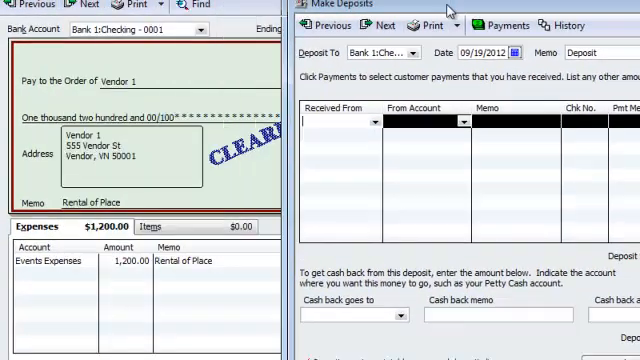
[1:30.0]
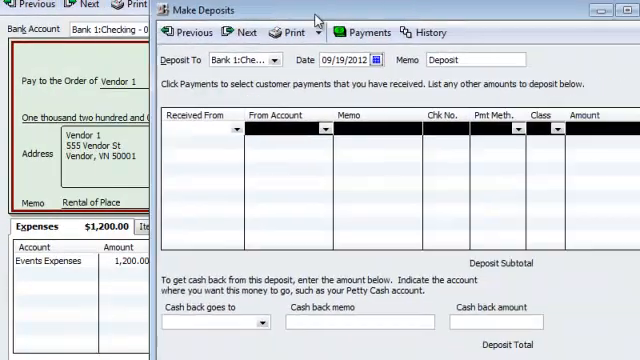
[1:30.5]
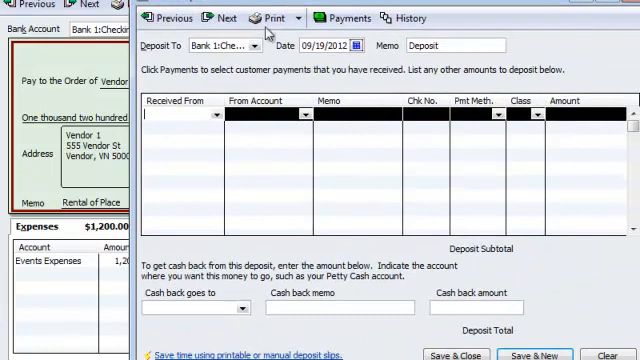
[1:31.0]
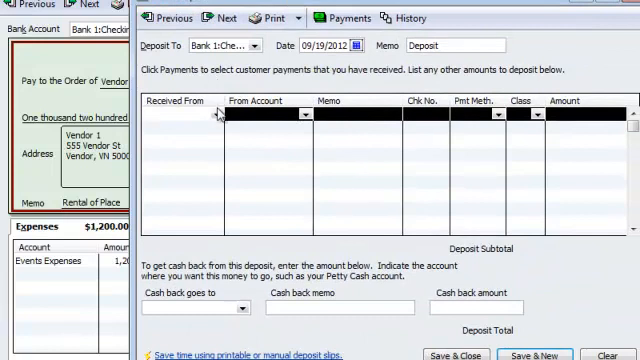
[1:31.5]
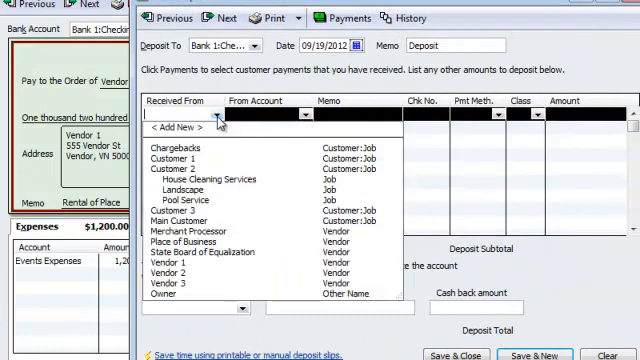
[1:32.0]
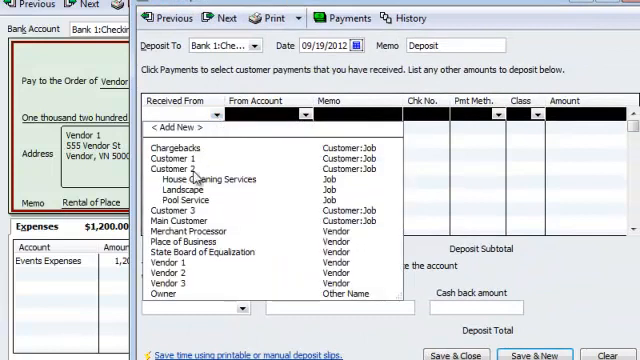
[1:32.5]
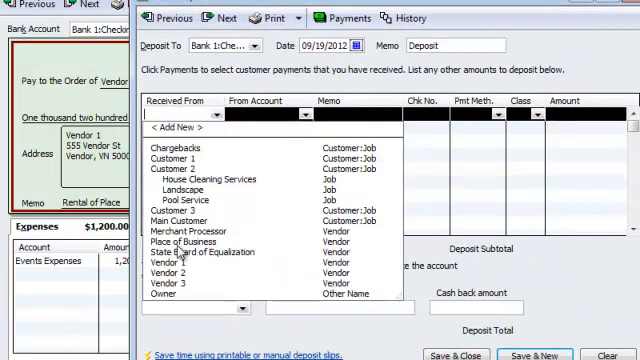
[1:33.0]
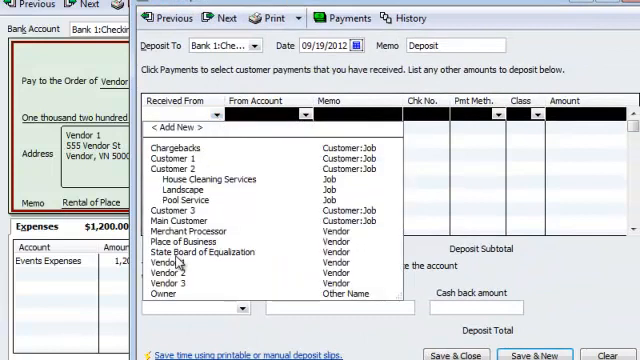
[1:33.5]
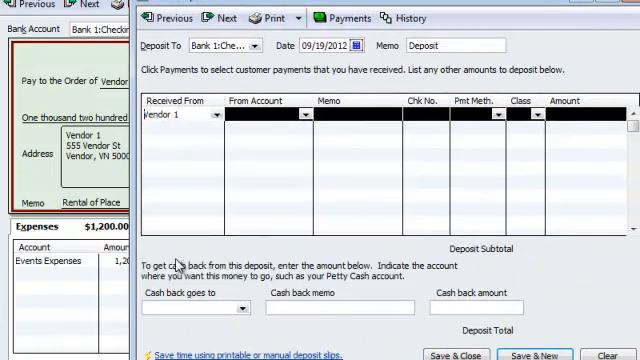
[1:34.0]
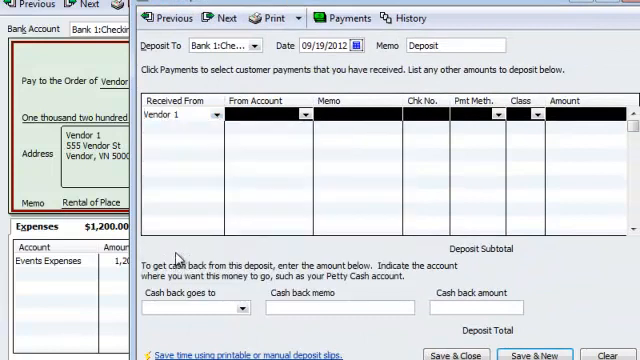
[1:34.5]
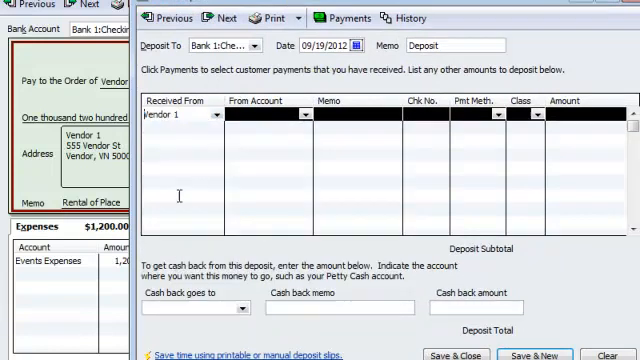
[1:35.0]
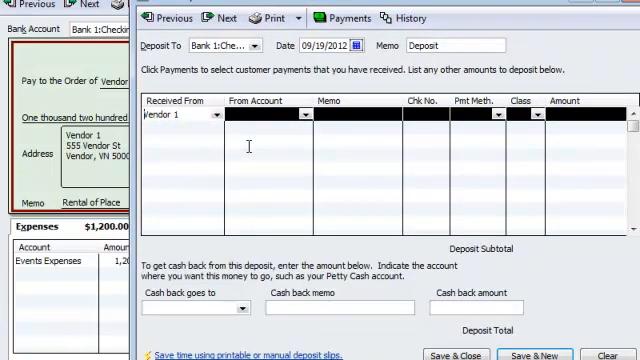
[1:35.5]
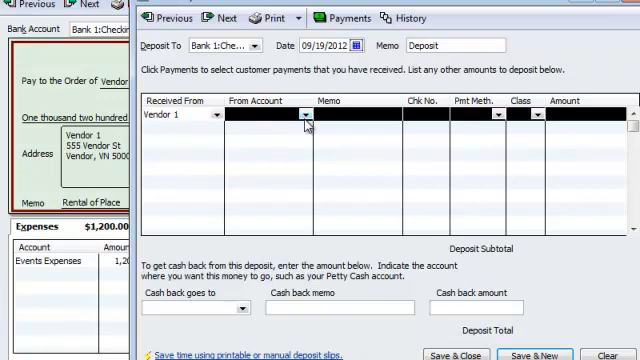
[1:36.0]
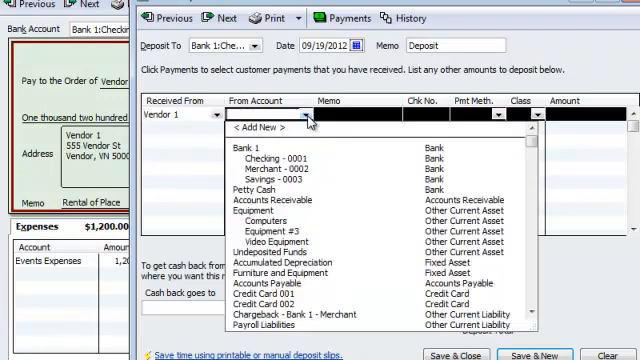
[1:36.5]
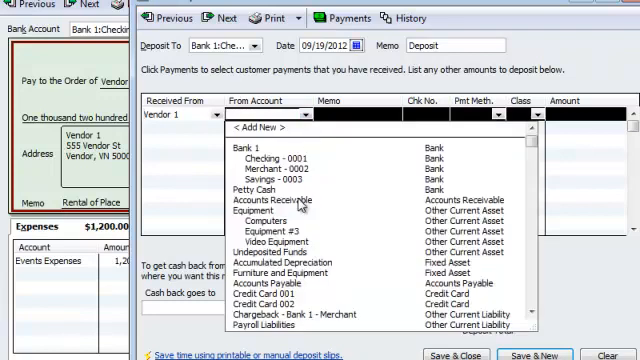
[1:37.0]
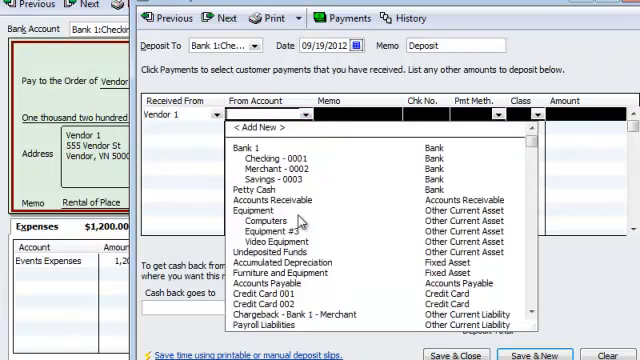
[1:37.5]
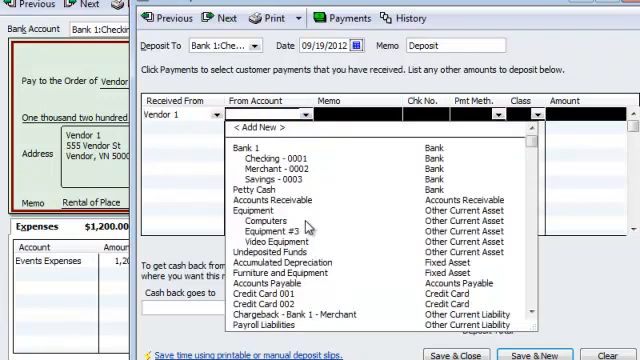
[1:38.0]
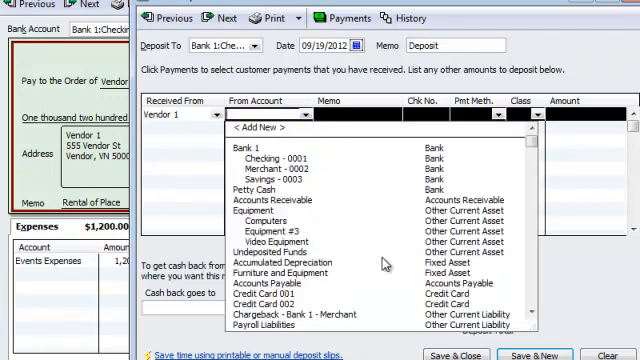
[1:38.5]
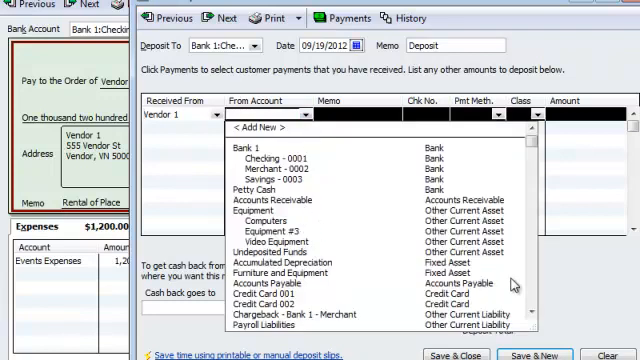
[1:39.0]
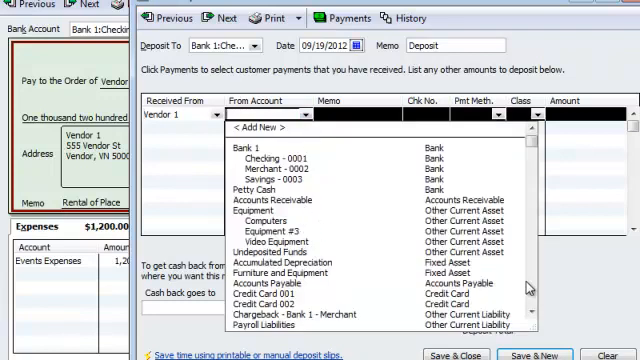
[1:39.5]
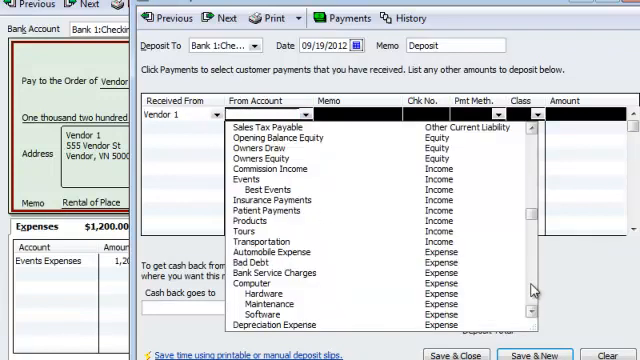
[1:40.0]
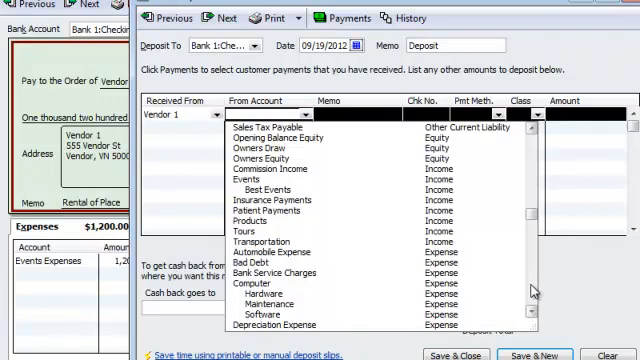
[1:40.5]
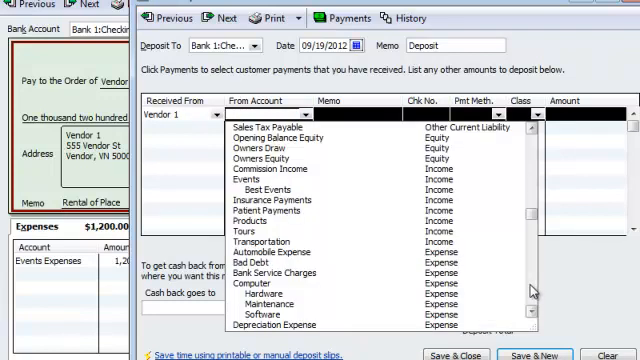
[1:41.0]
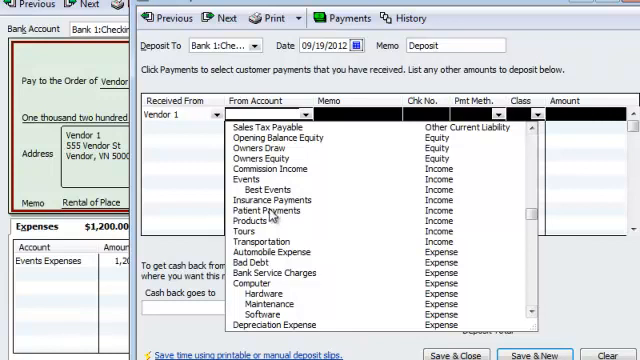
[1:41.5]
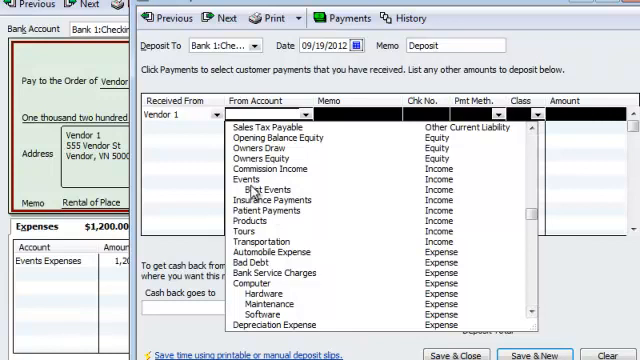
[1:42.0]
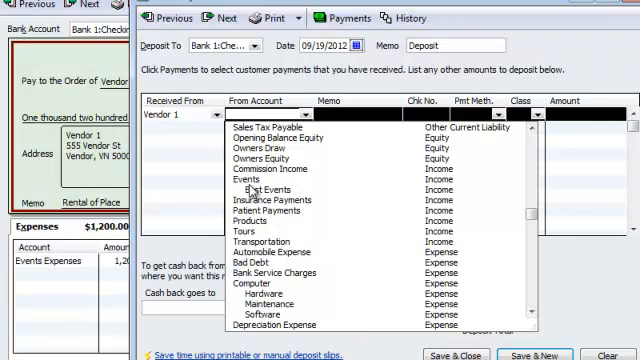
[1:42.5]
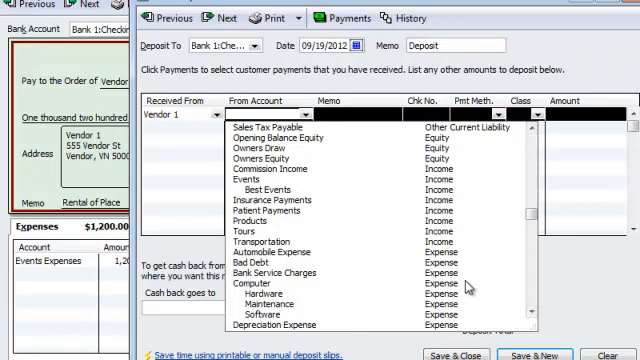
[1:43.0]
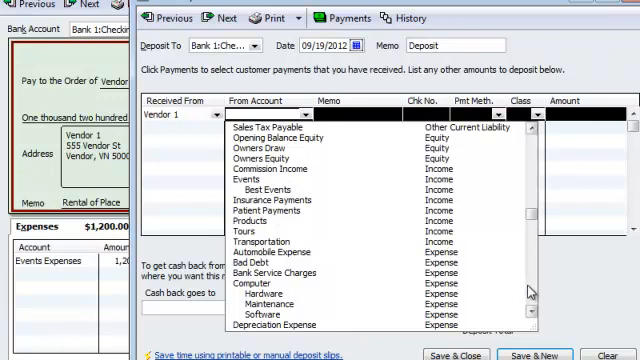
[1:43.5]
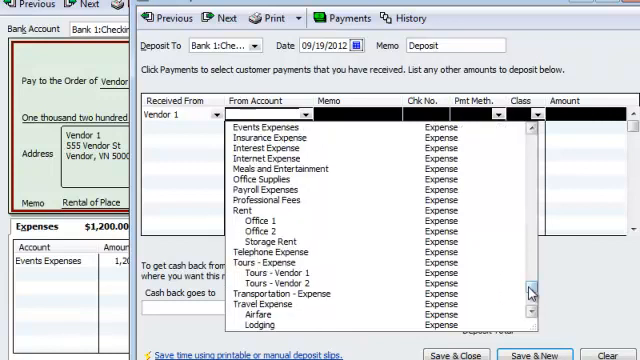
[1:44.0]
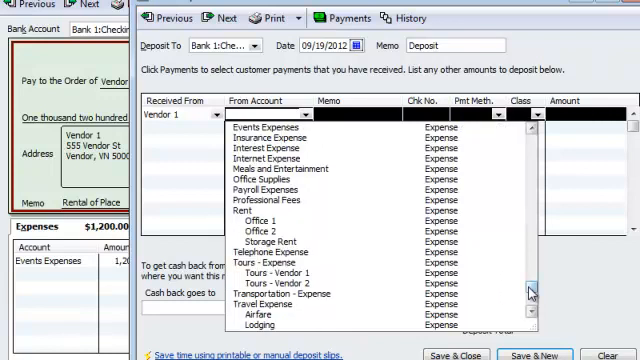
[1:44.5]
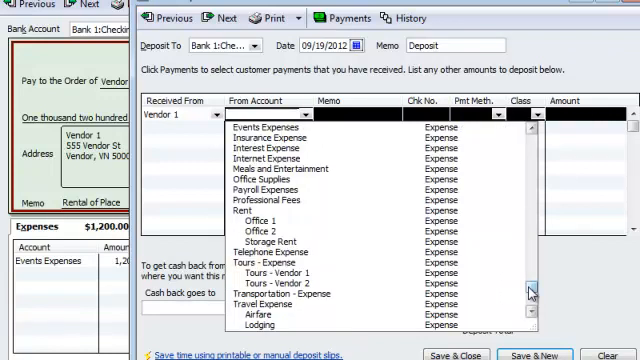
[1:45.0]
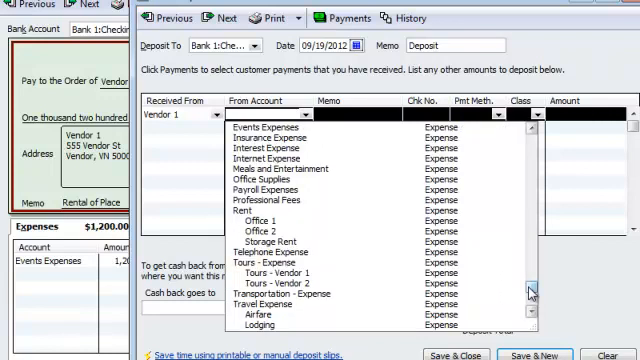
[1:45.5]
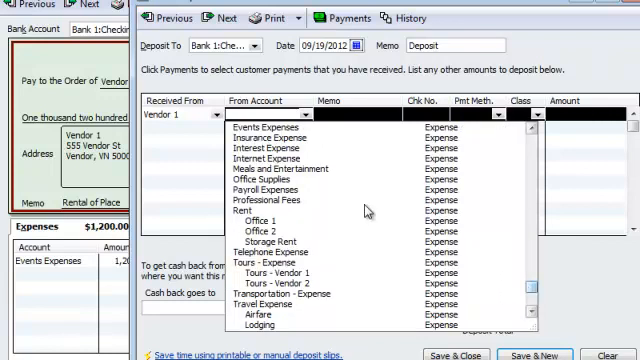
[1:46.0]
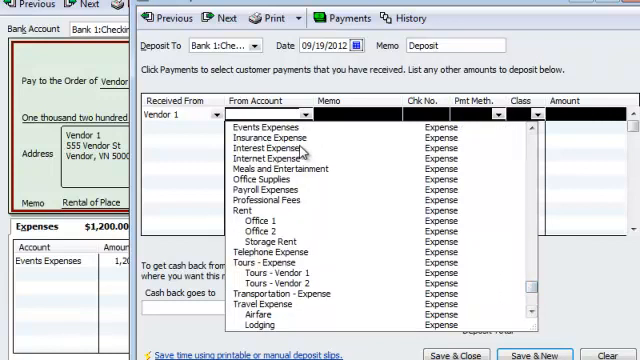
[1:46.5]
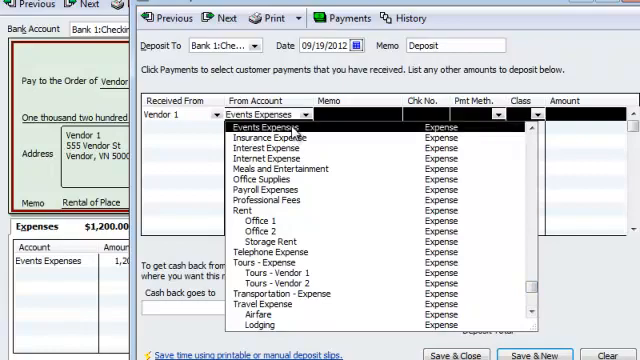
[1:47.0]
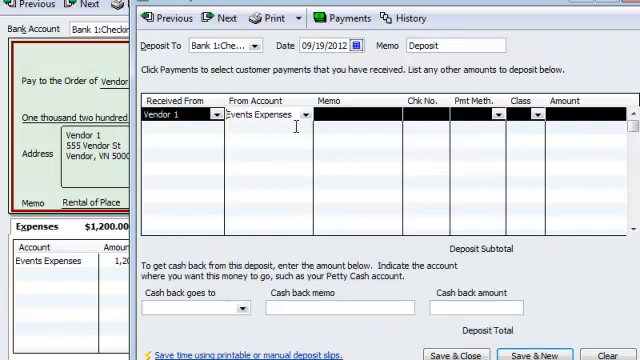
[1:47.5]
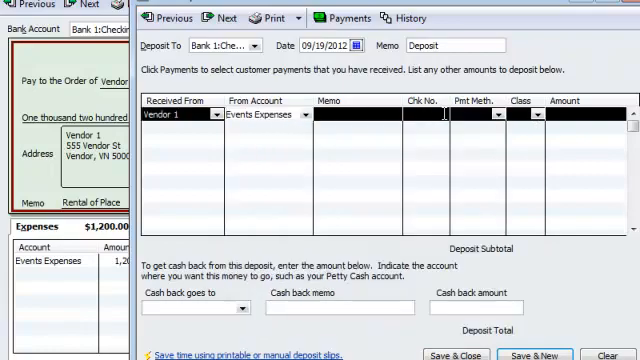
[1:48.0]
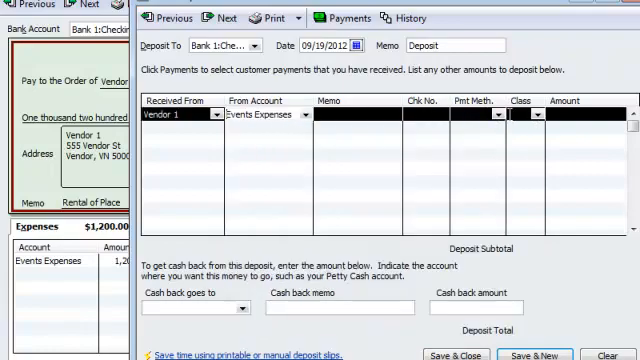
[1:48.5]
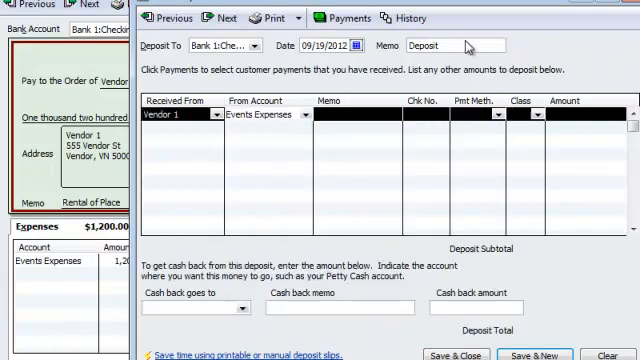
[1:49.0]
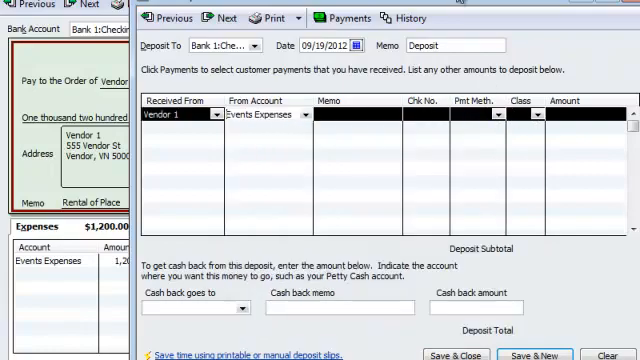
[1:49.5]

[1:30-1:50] The user moves the Make Deposits tab a little, then goes to an option that says "Receive From", which opens many options, and clicks Vendor 1 to edit the table. The user then chooses the From account, opening a small window with many options, looks for Events, keeps going down, and finds Event Expenses among options such as Expenses, Event Expenses and Insurance Expenses. Event Expenses is entered into the table as the From account, showing the deposit being received from Vendor 1.